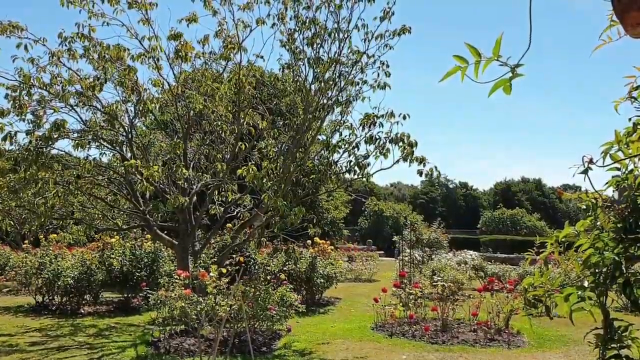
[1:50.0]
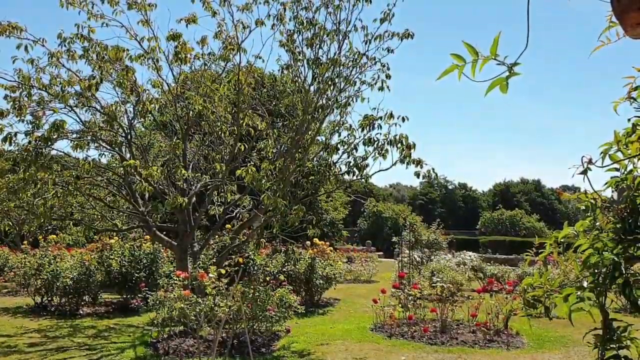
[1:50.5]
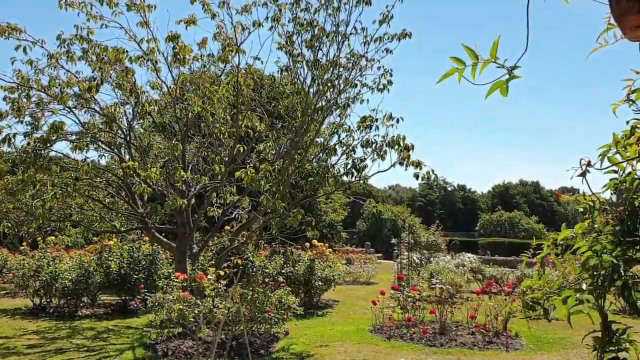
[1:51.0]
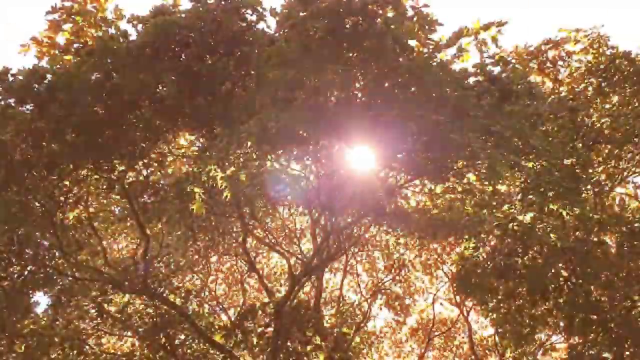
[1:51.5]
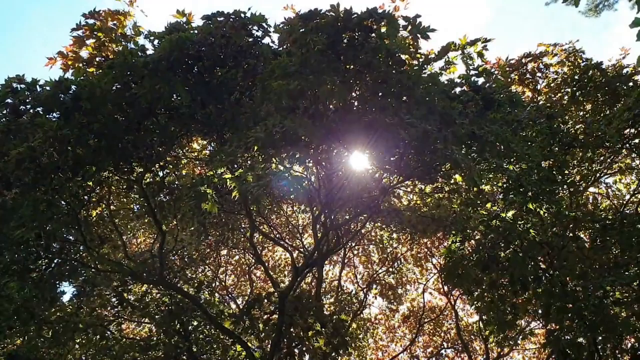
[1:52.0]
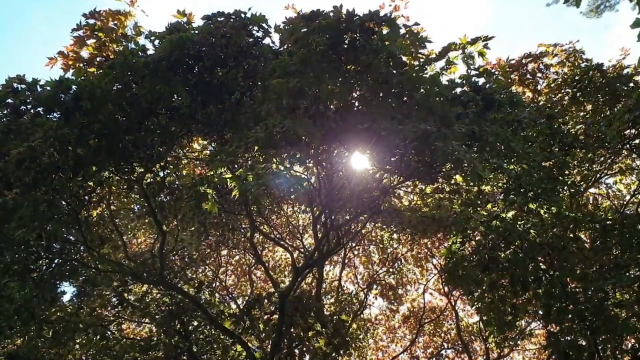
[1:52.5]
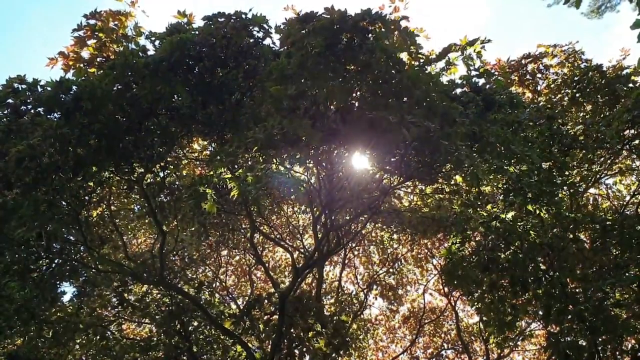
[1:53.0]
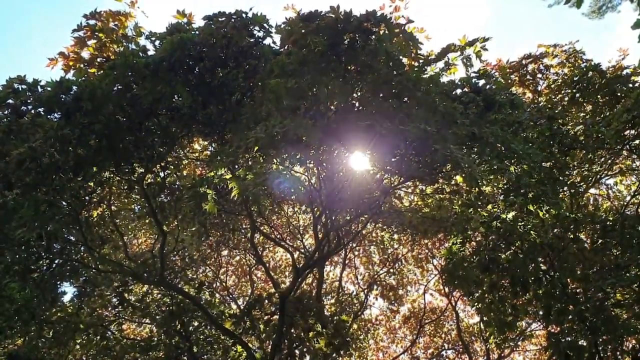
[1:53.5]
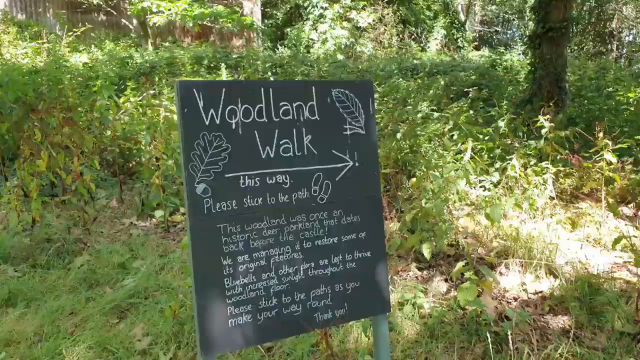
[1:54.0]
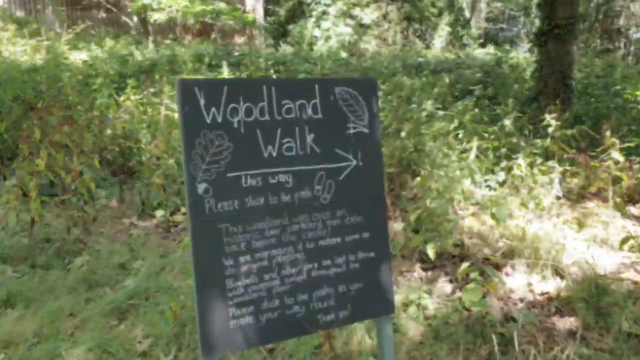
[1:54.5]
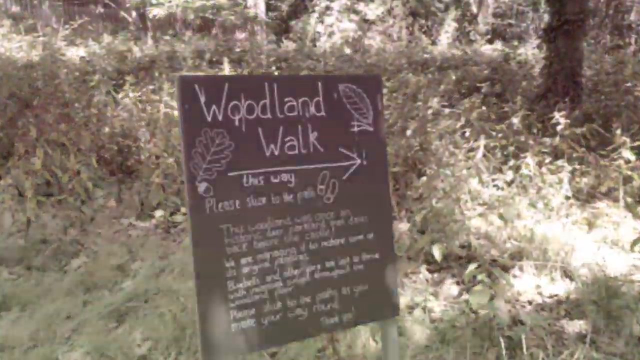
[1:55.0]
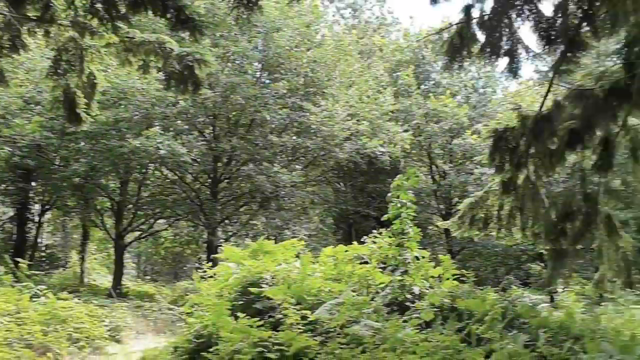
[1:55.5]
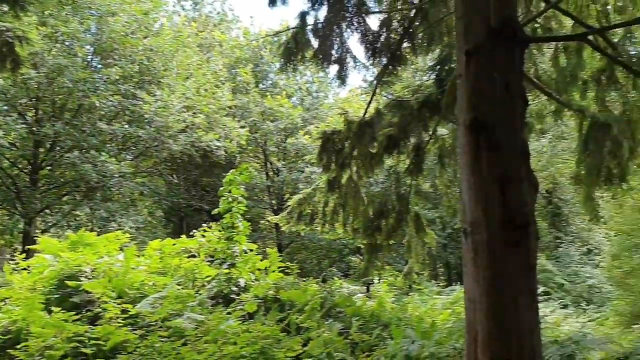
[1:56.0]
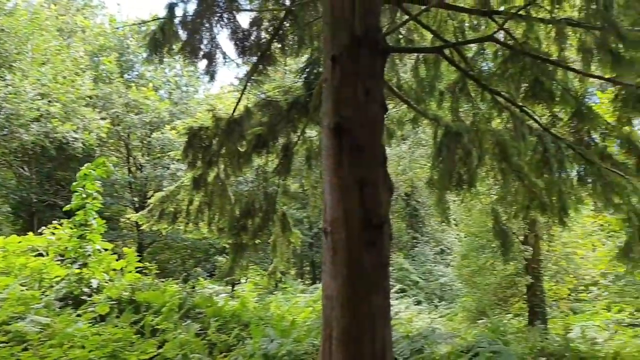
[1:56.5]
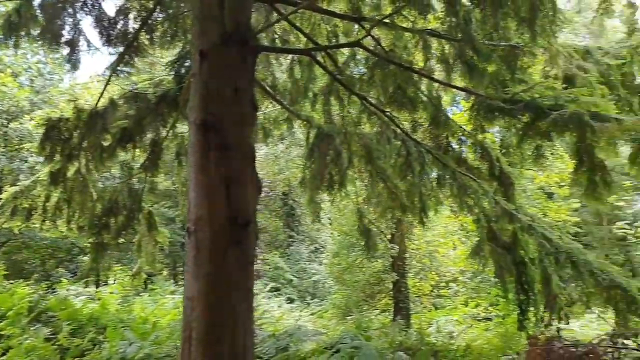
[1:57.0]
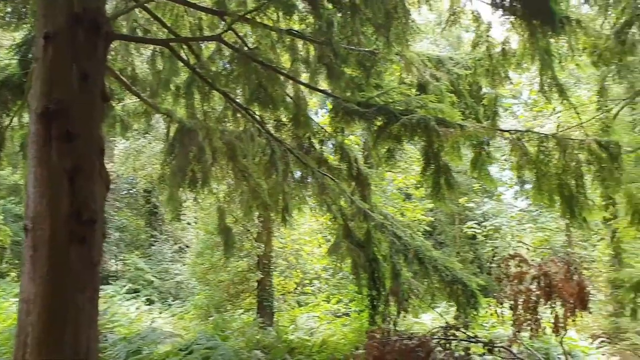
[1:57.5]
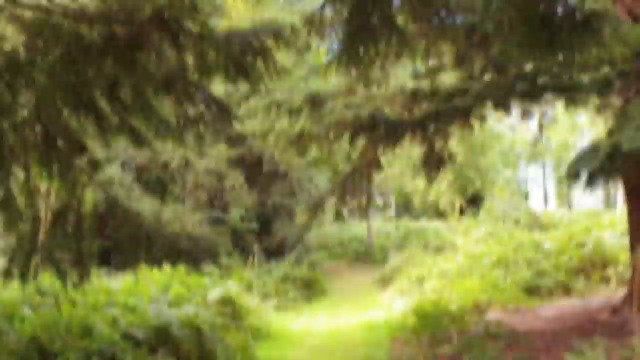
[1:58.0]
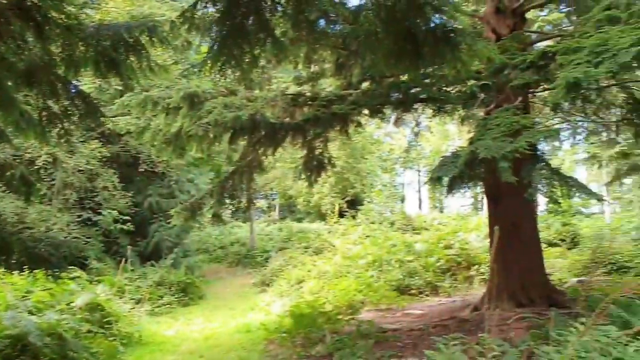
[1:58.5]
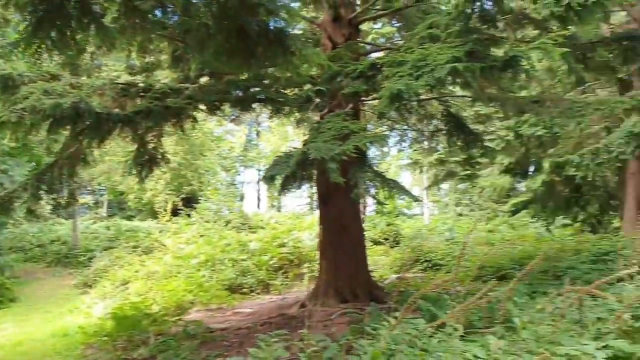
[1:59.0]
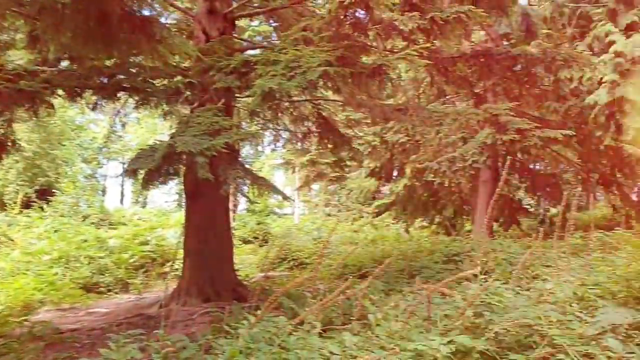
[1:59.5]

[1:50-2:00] The title "Travelling in silence" appears, followed by subtitles giving details about the castle being brick, old and from the 15th century. The camera travels through the outskirts of the castle to the back of the castle and the garden. After passing the flowers and the sculptures, it reaches a part where text indicates a woodland walk and moves towards it. The woodland walk is less formal and more natural than the earlier garden, and more shots of the garden follow.